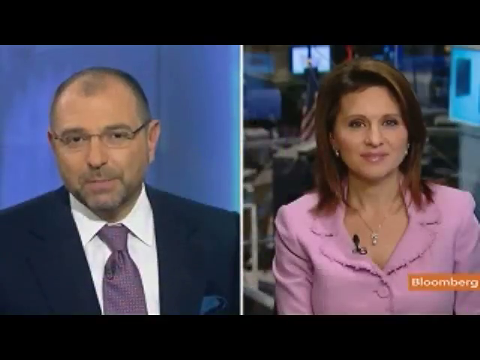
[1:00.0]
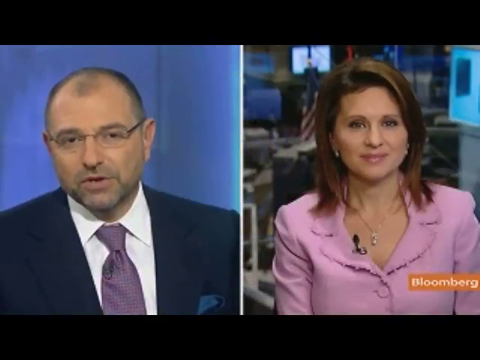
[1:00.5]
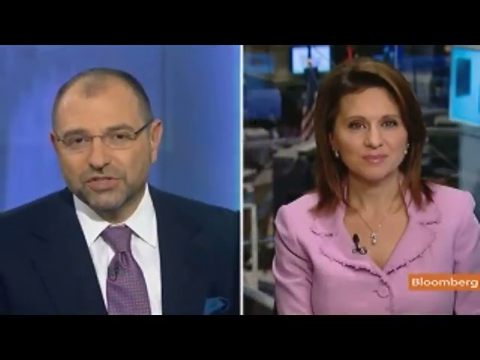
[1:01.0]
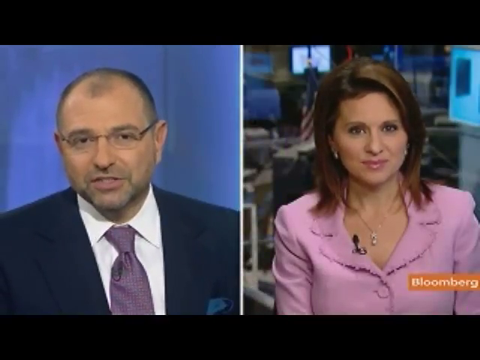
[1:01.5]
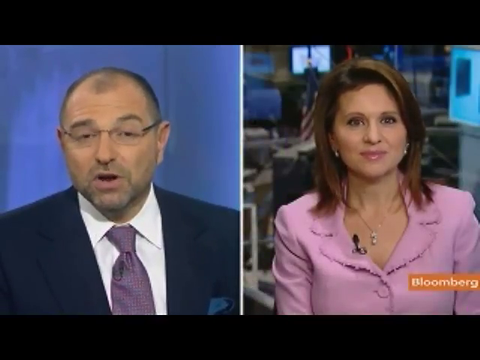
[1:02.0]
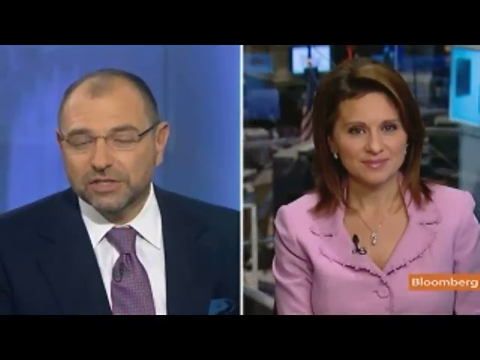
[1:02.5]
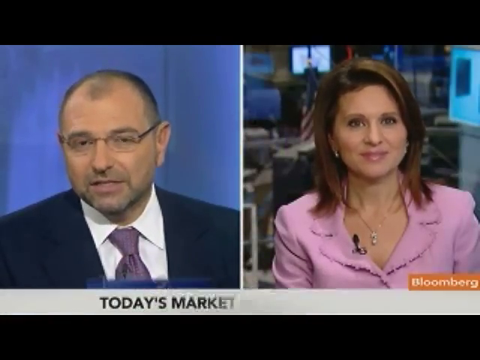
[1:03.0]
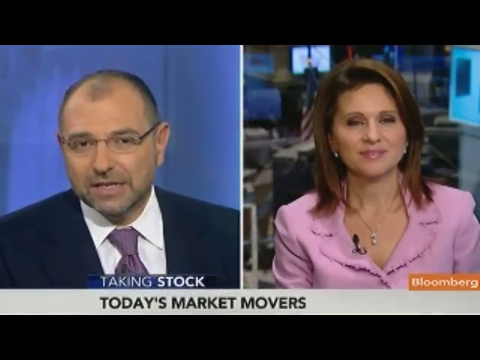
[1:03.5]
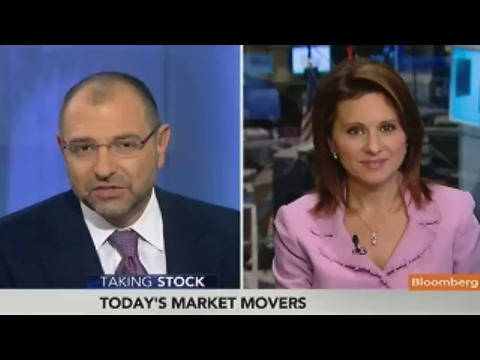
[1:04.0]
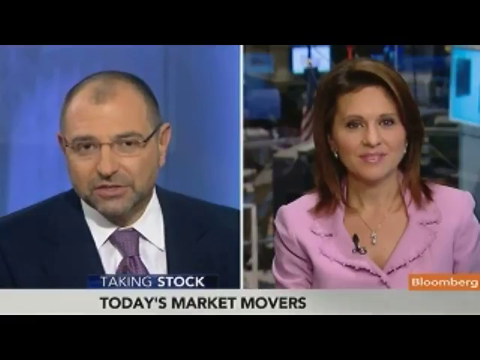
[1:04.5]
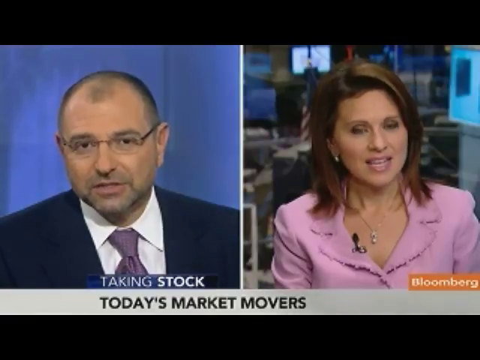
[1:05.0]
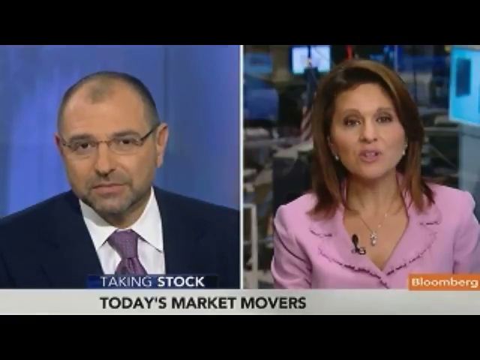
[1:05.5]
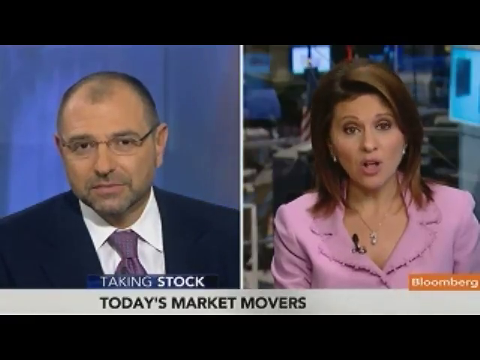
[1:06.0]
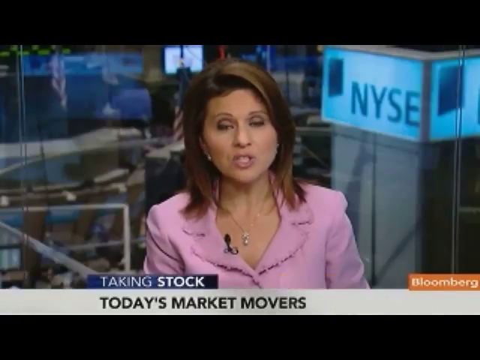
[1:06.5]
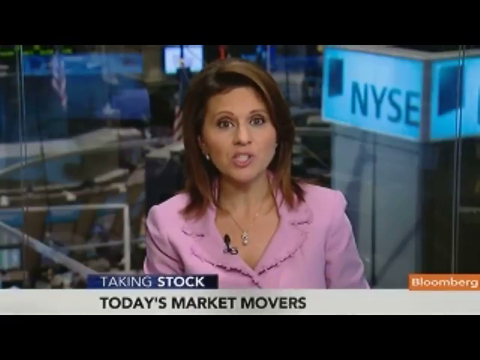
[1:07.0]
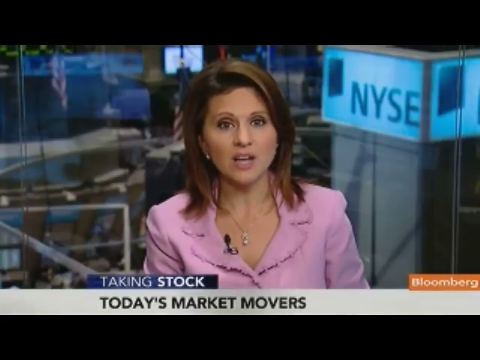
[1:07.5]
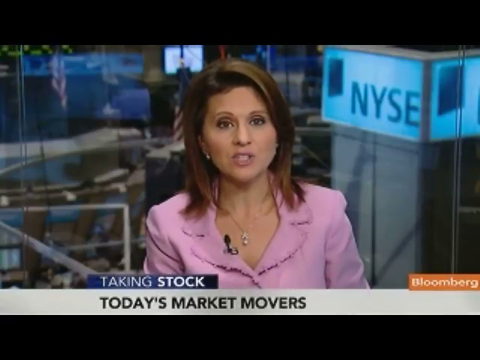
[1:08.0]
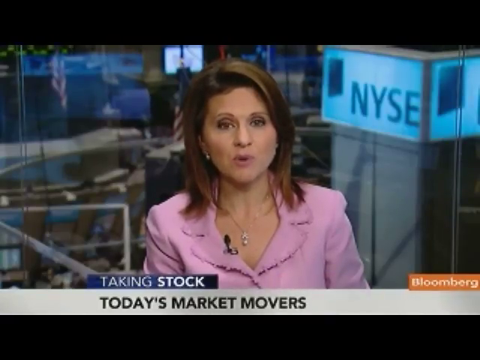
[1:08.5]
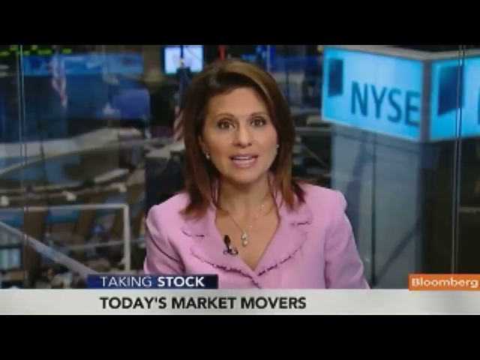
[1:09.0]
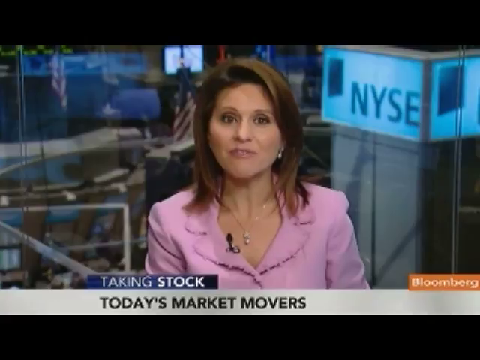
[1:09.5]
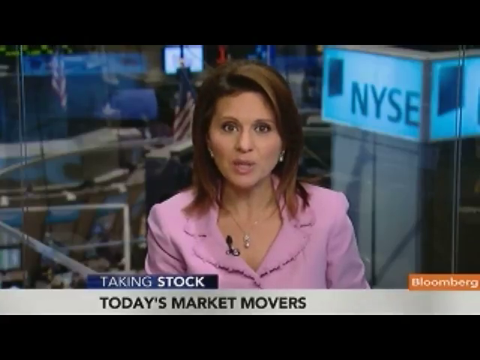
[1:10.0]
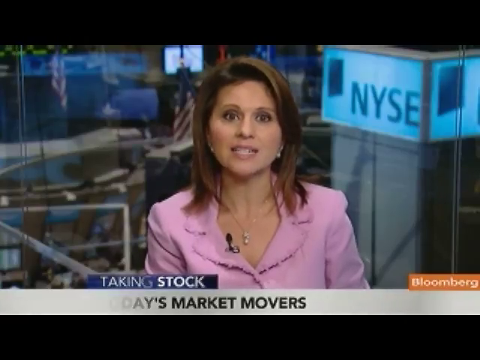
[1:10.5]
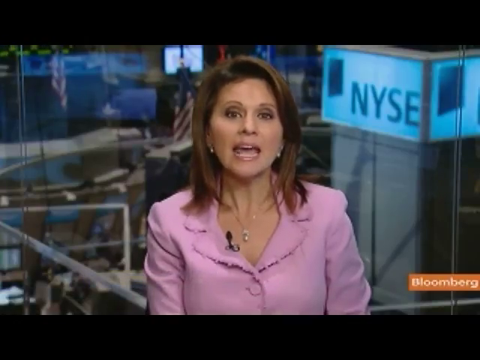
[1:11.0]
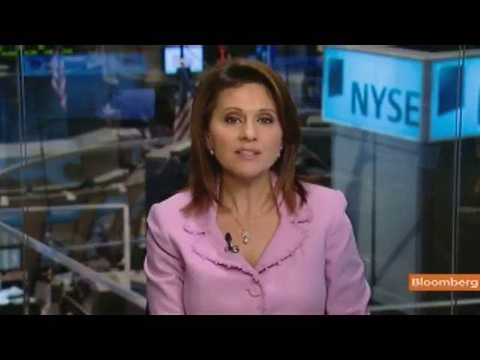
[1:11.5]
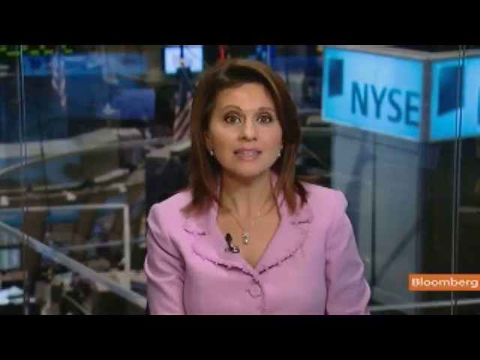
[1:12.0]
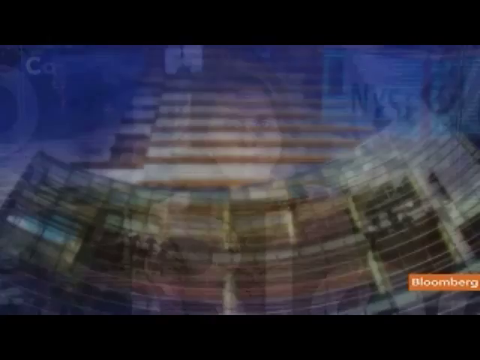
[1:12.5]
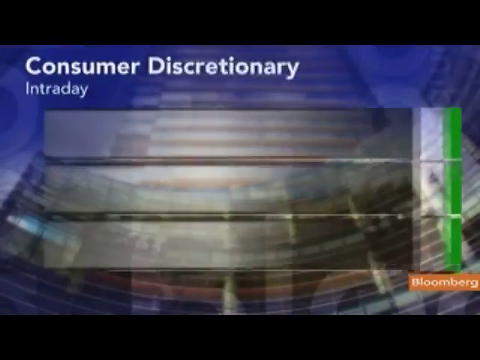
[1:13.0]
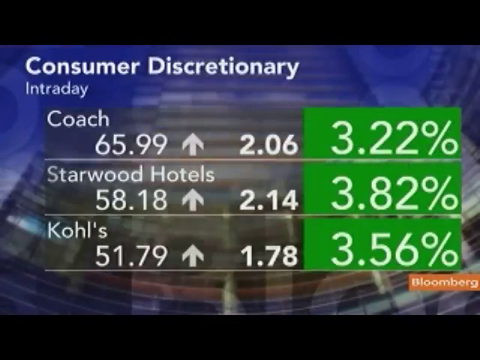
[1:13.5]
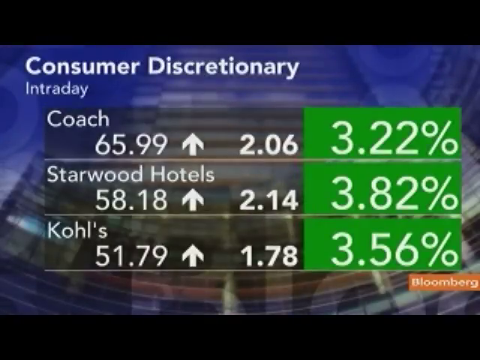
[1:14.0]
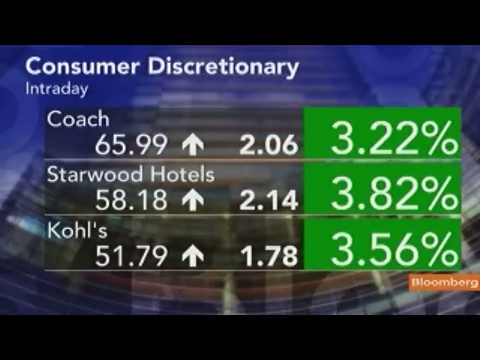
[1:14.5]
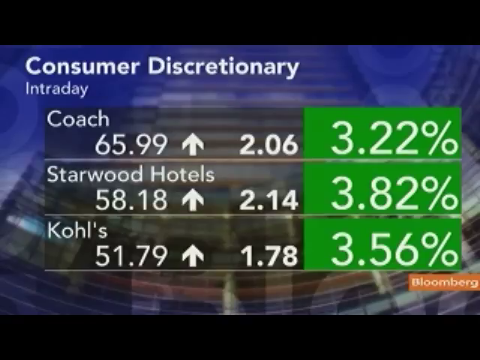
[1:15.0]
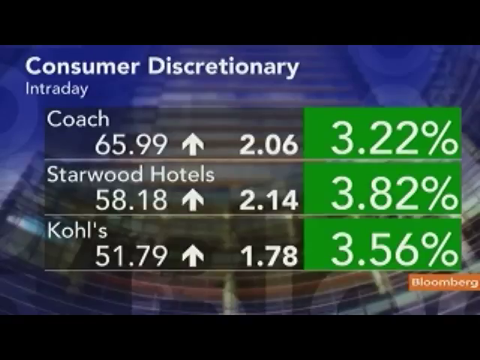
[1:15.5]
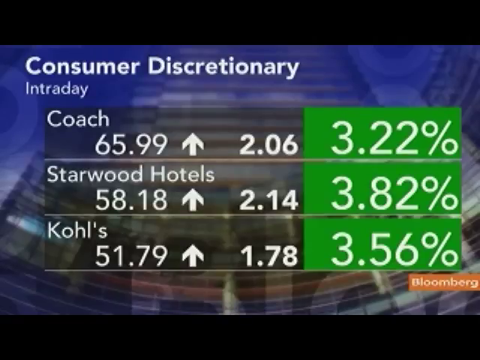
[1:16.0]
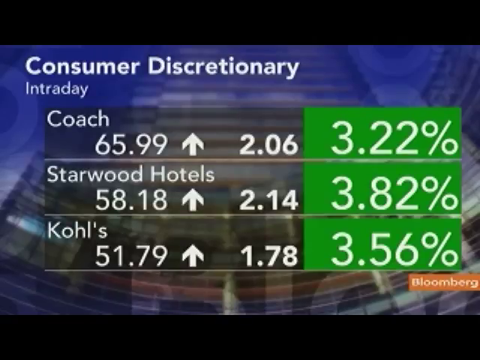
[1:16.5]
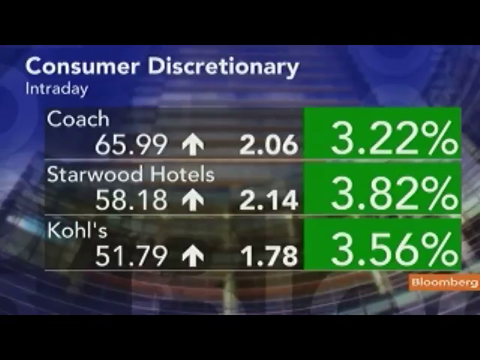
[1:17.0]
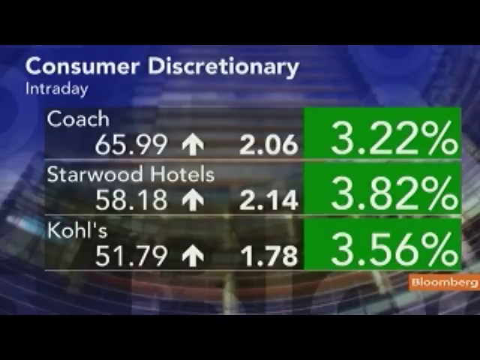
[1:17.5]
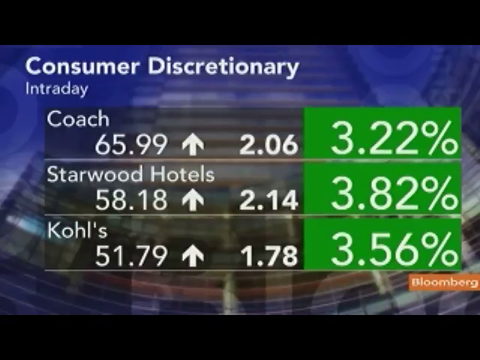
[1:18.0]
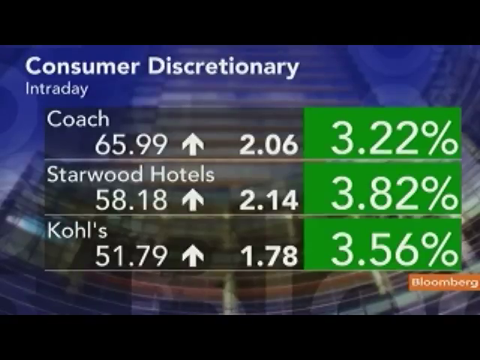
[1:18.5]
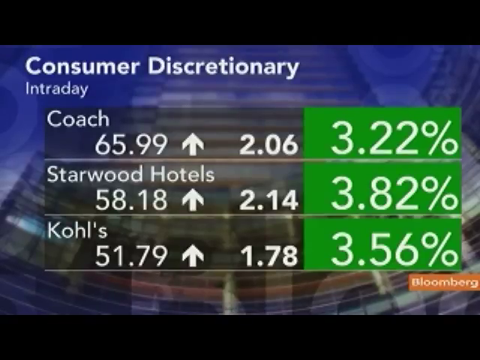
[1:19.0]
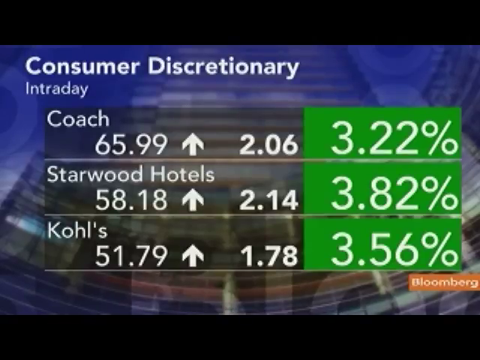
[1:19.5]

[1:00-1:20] In the Bloomberg newscast, two people are shown, both smiling. On the right is a woman in a pink outfit with a microphone on her lapel, a necklace with a pendant hanging from it, earrings and brown hair; she is in the newsroom, with an American flag and desks behind her. On the left is a man with glasses, a dark blue jacket, a purple tie and a white shirt. Behind them is a blue LCD screen. The man on the left is talking, and the text at the bottom reads "taking stock" and "today's market movers." She then asks him a question or talks to him, and continues talking. A new graphic appears reading "consumer discretionary" with "intra day" beneath it, and three horizontal sections: Coach, Starwood Hotels and Kohl's, all in green and each up at least 3 percent. Coach is up 3.22%, Starwood Hotels is up 3.82%, and Kohl's is up 3.56%.